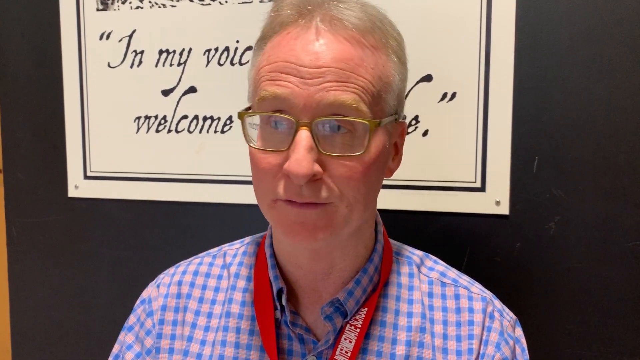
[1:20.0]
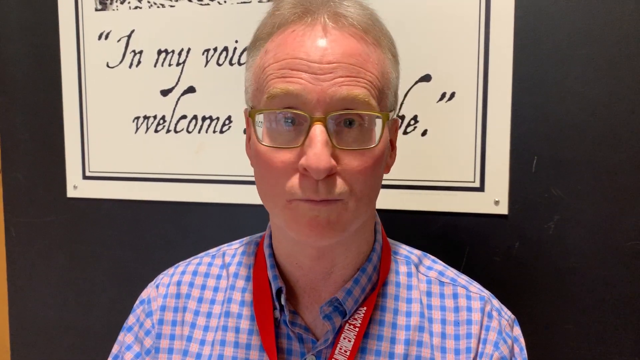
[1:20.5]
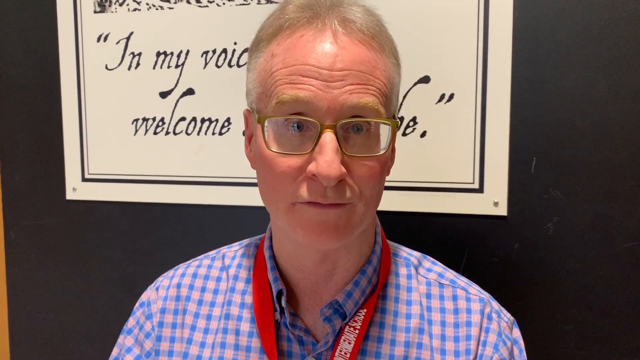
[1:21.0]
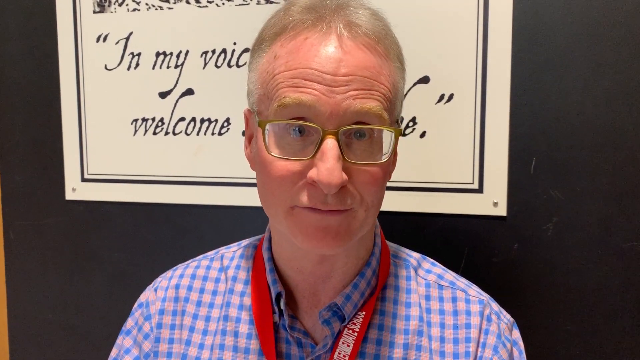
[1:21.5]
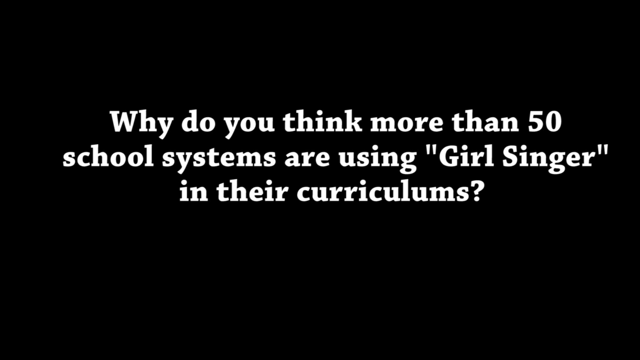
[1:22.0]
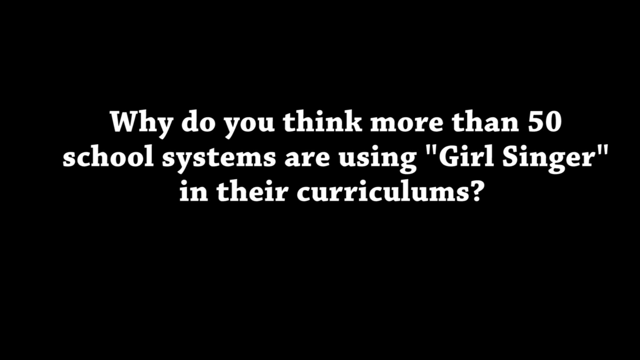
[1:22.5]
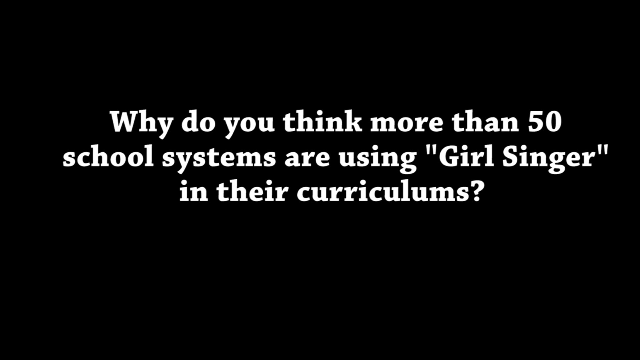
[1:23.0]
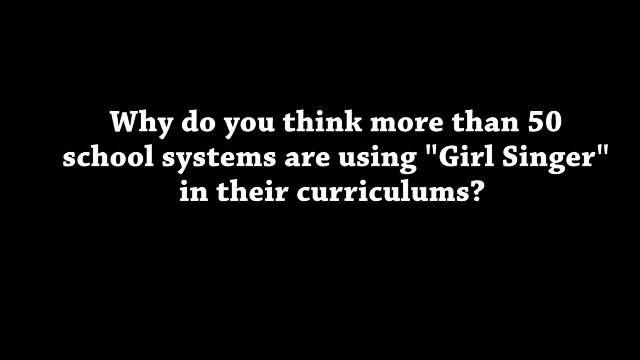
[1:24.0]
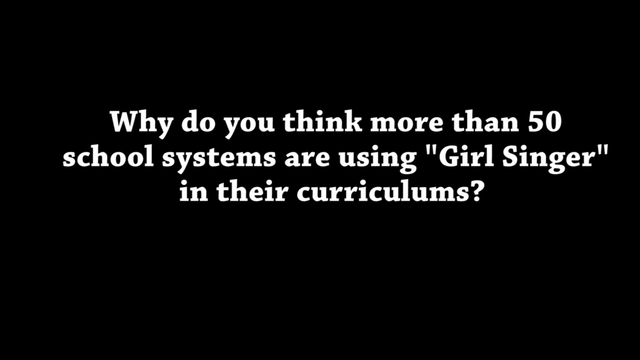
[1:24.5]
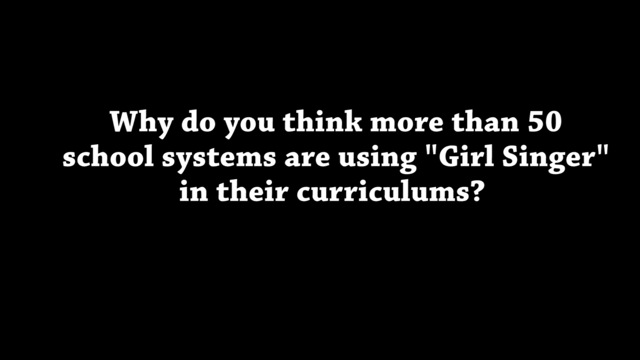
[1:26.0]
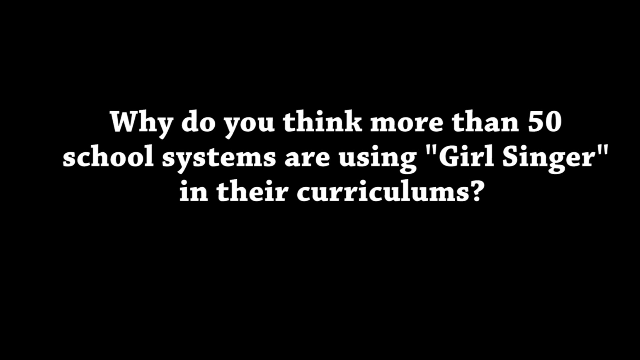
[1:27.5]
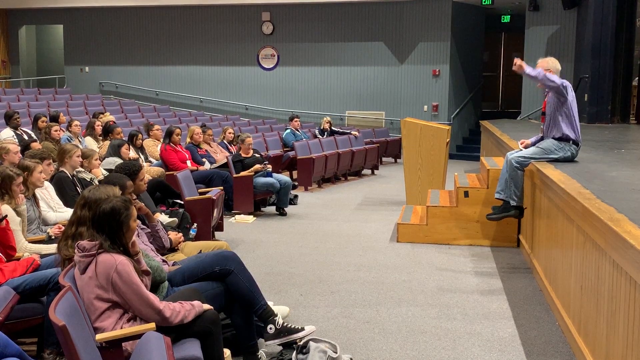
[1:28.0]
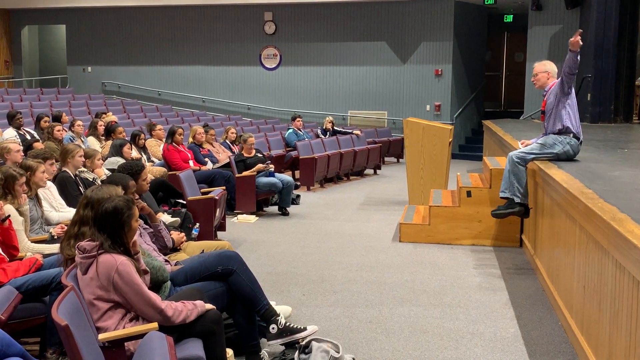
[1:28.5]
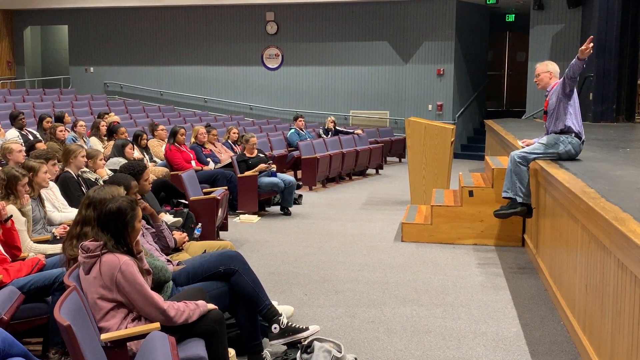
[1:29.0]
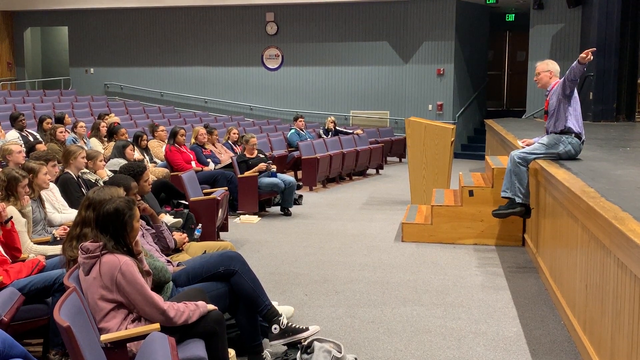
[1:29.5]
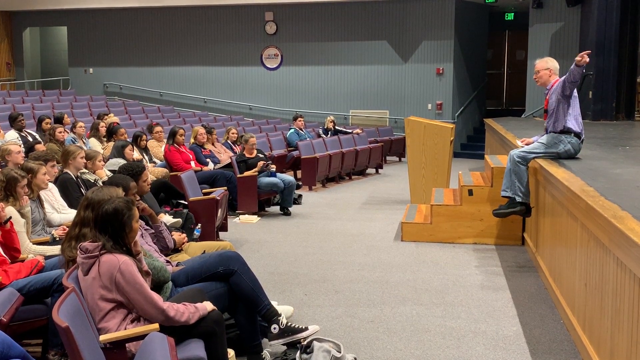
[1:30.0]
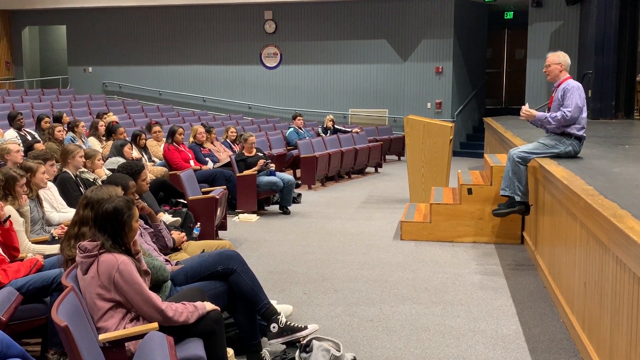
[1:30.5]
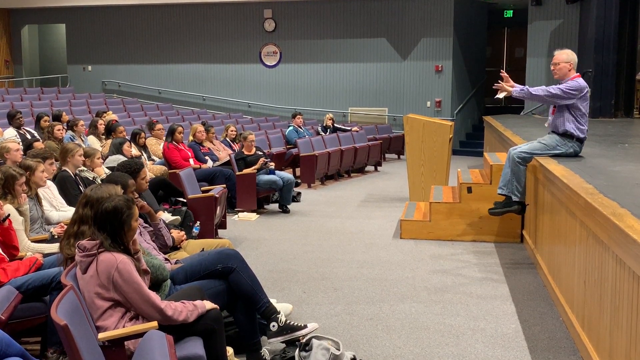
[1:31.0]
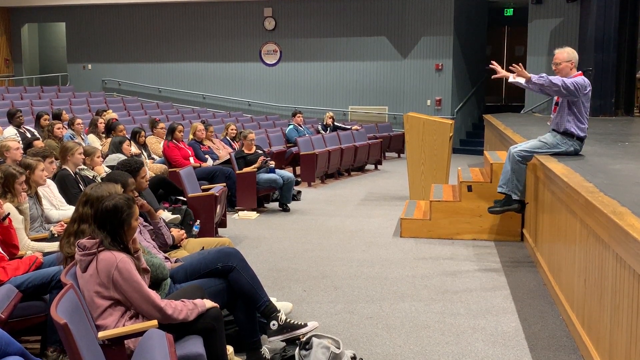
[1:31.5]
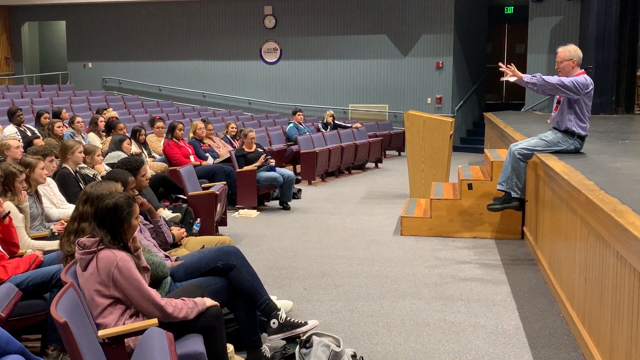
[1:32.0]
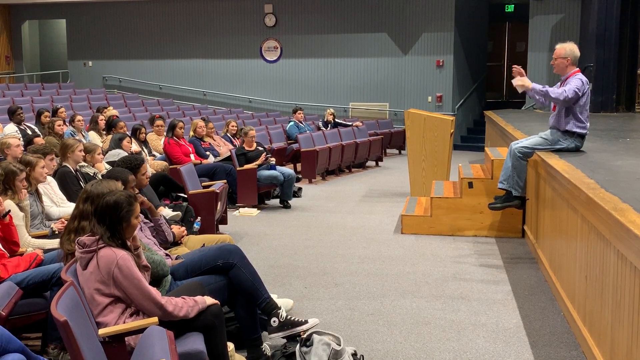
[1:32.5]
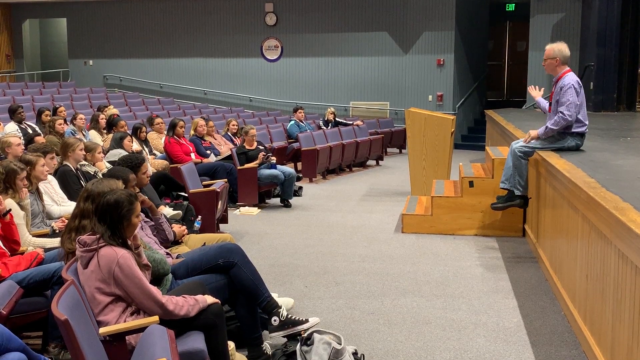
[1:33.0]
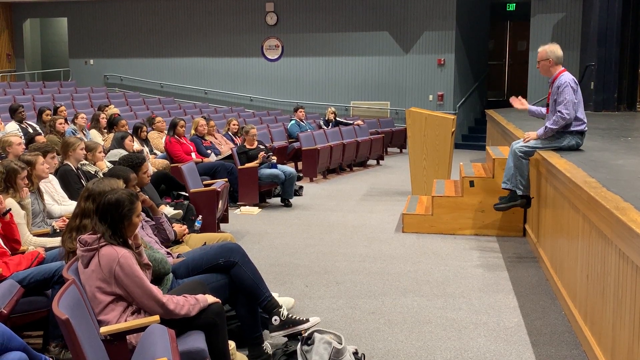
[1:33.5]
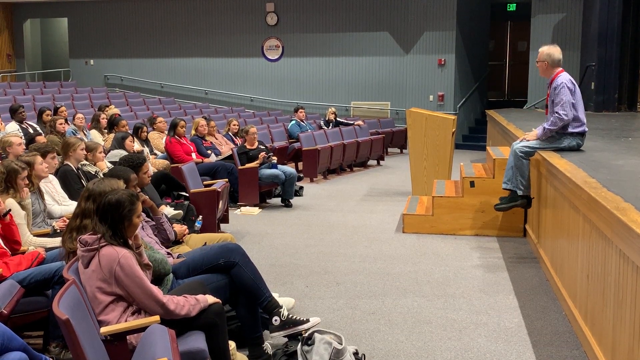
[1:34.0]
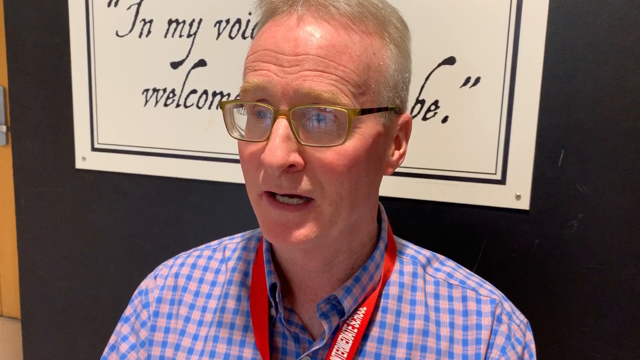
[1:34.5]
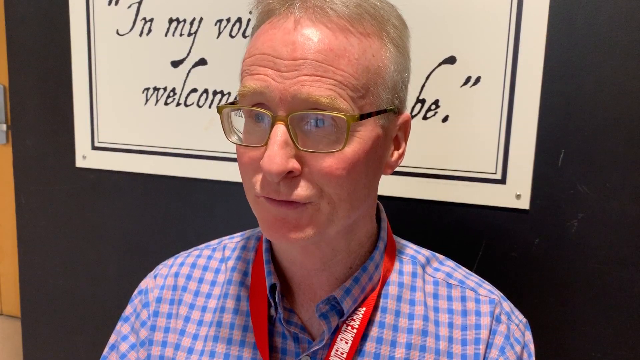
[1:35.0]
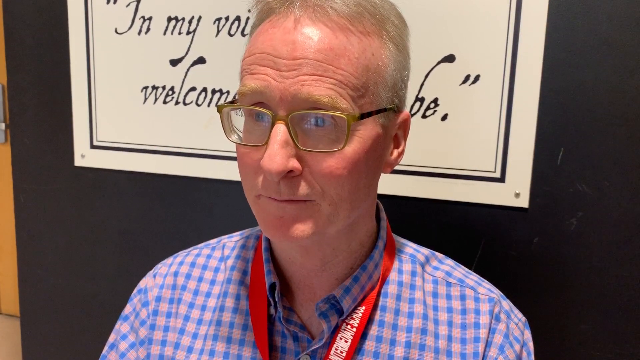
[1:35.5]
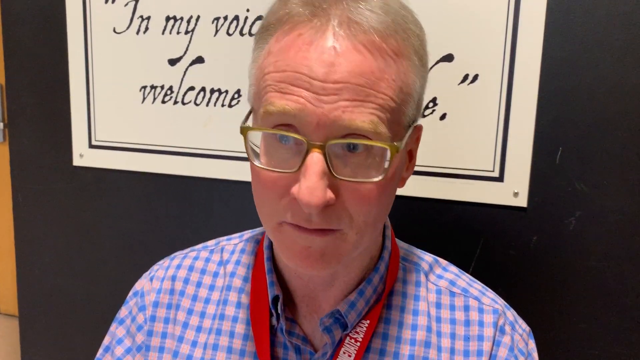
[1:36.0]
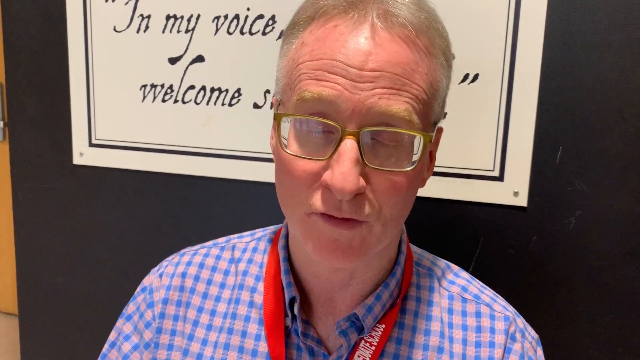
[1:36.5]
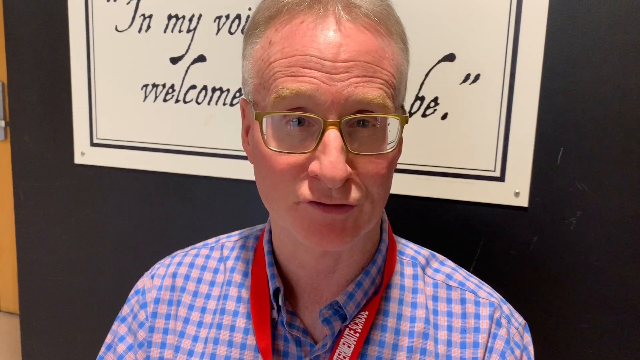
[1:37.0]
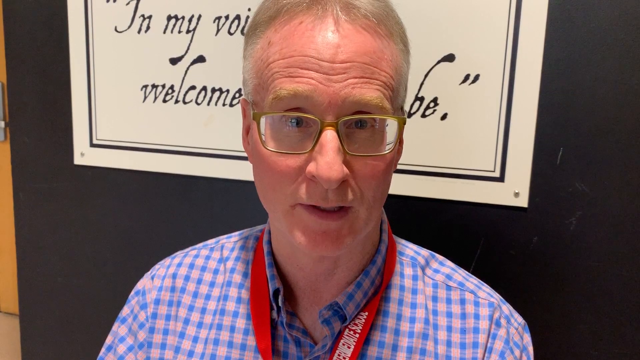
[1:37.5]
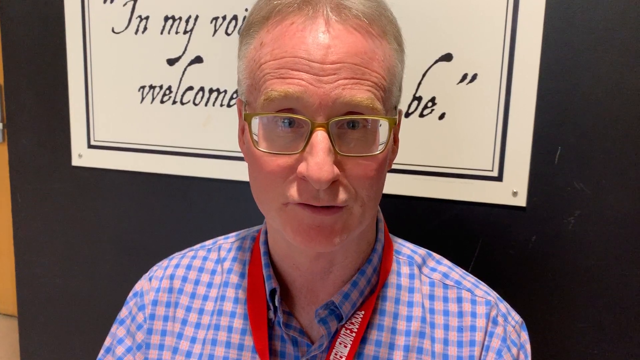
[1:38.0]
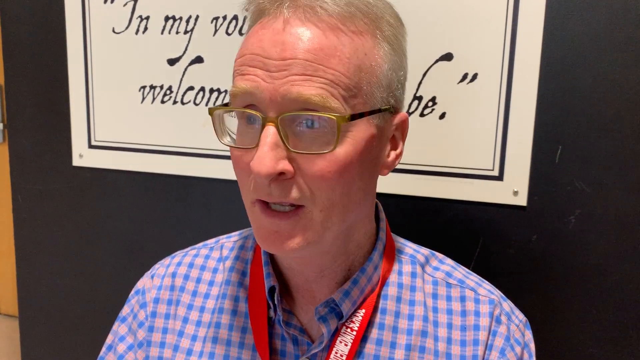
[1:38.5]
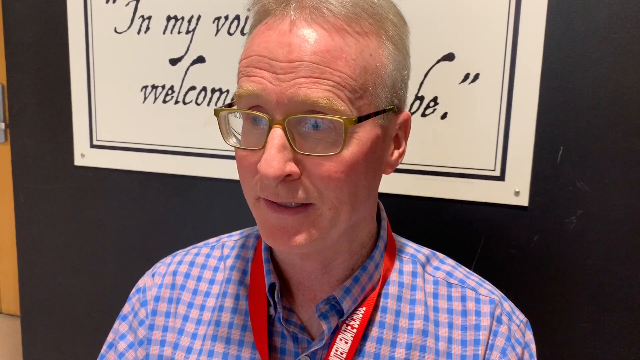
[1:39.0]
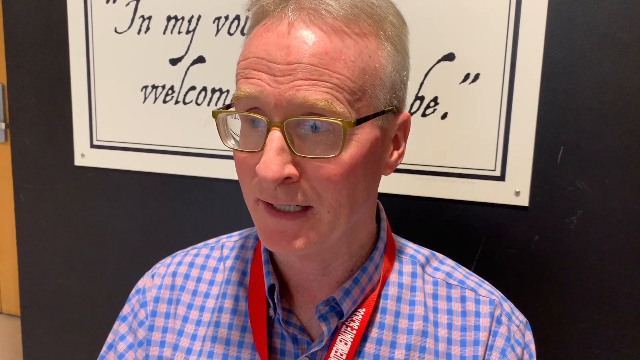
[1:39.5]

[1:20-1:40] The man, apparently a teacher, is shown in an auditorium with a bunch of seniors in the front few rows. Text on screen then says "why do you think more than 50 school systems are using Girl Singer in their curriculums?" He is shown sitting on the end of the stage, and then the video cuts back to him in front of the poster, whose words are partly blocked by his head.